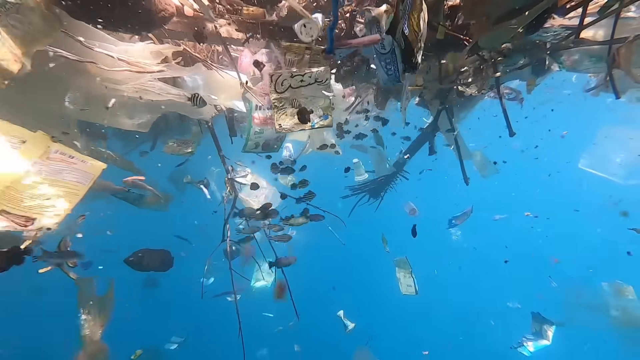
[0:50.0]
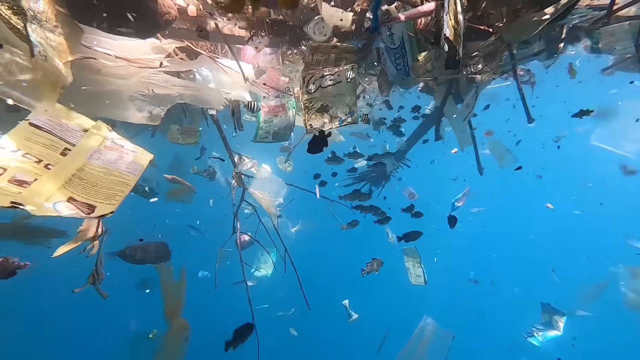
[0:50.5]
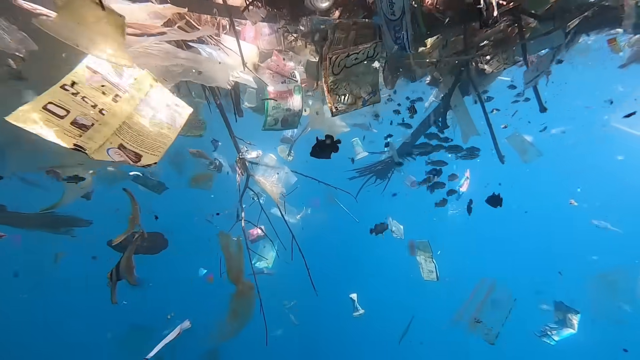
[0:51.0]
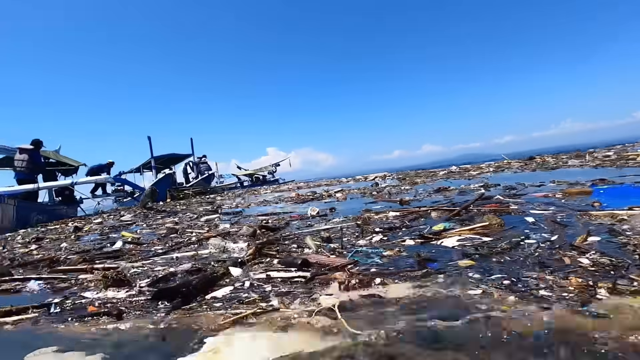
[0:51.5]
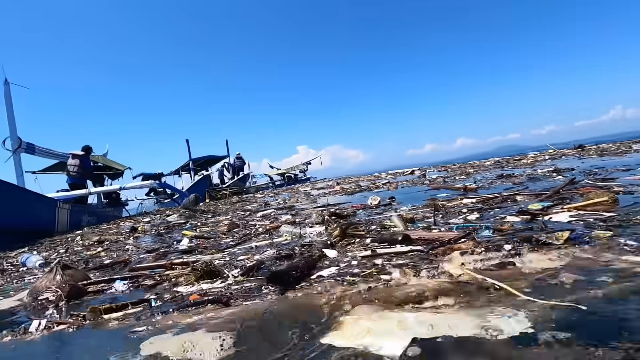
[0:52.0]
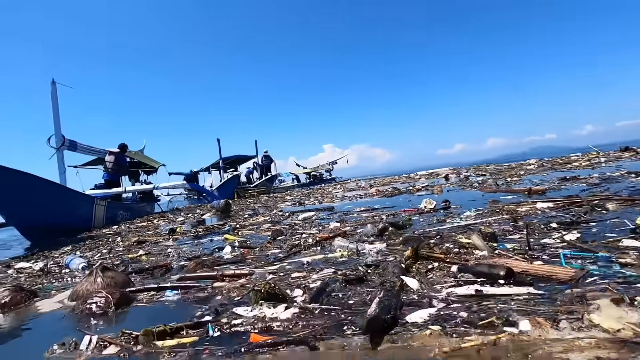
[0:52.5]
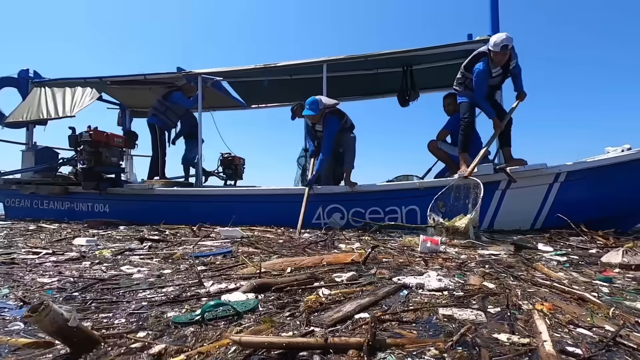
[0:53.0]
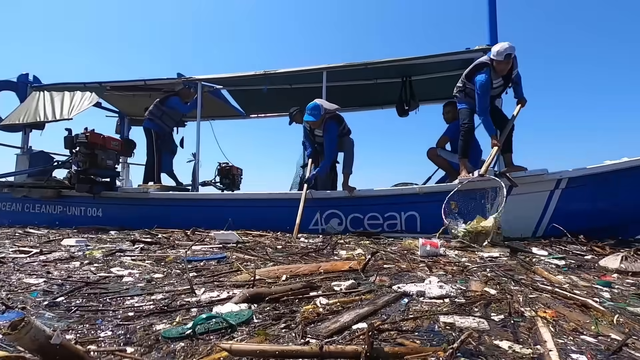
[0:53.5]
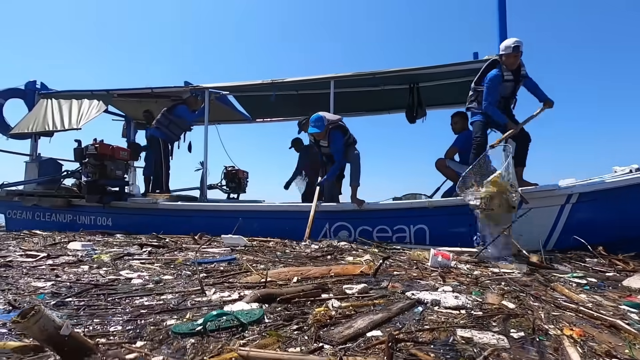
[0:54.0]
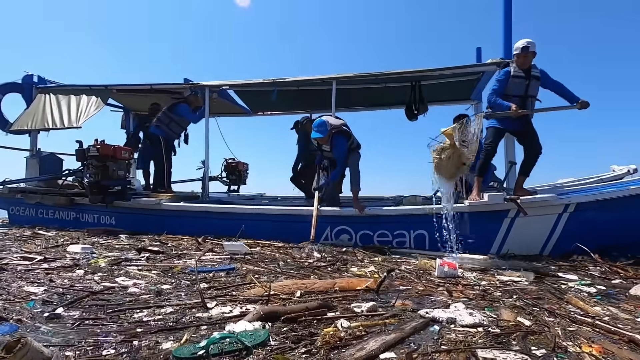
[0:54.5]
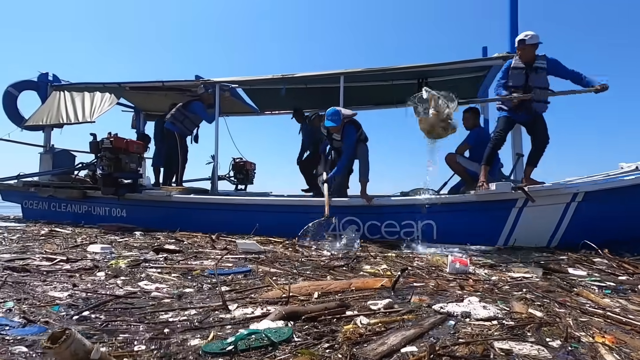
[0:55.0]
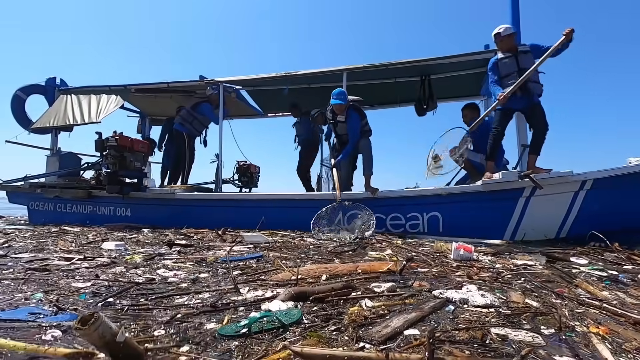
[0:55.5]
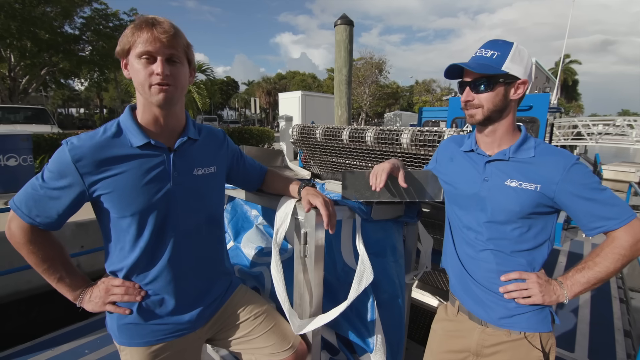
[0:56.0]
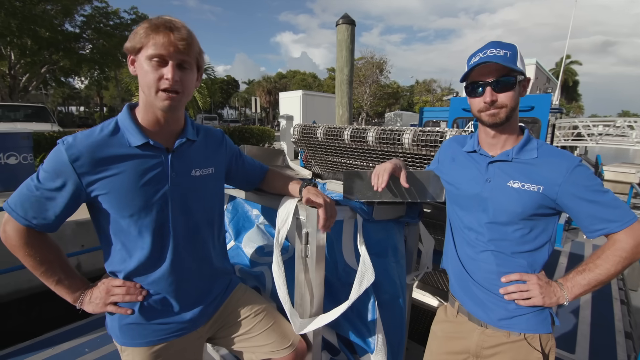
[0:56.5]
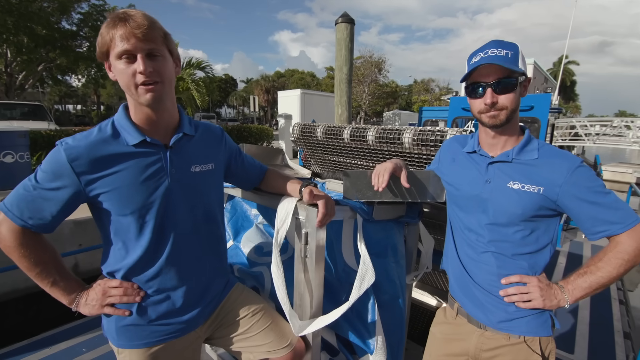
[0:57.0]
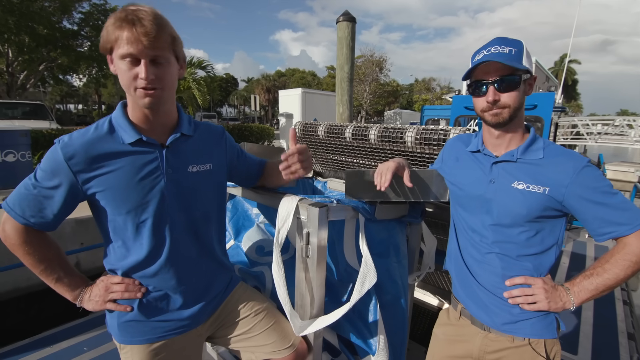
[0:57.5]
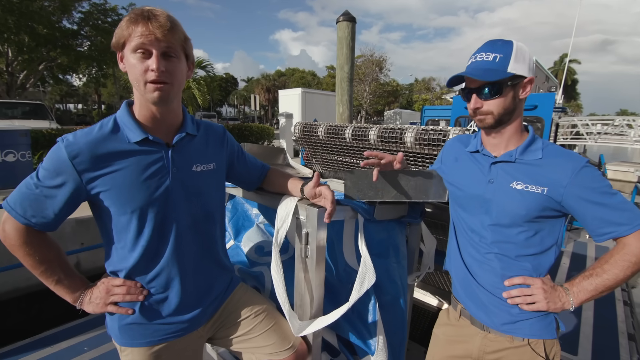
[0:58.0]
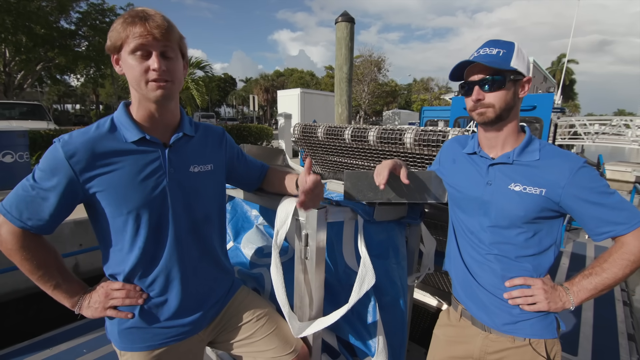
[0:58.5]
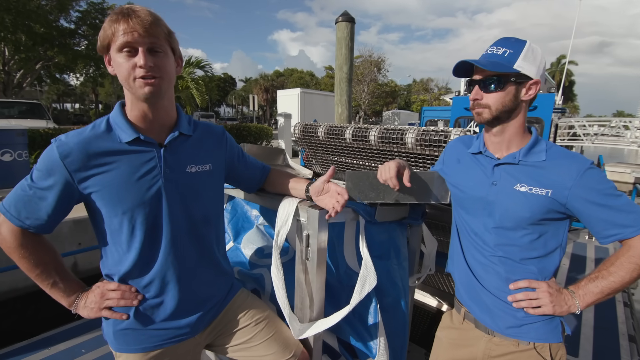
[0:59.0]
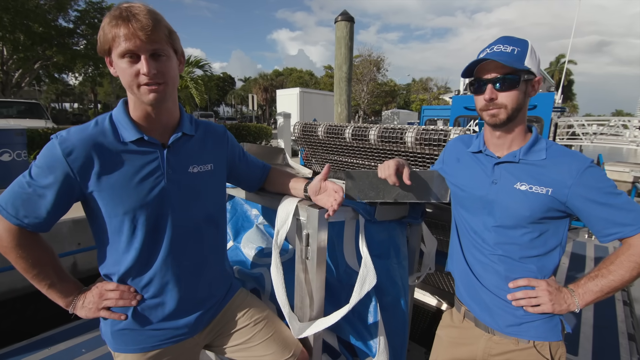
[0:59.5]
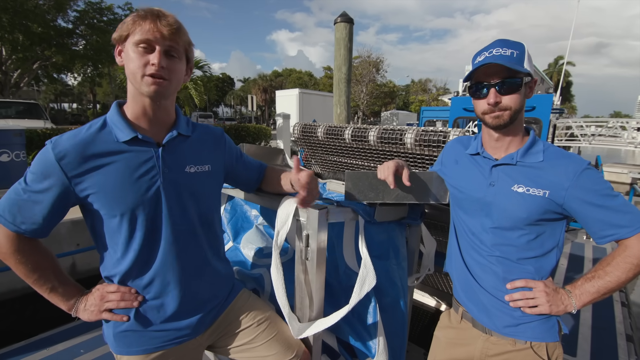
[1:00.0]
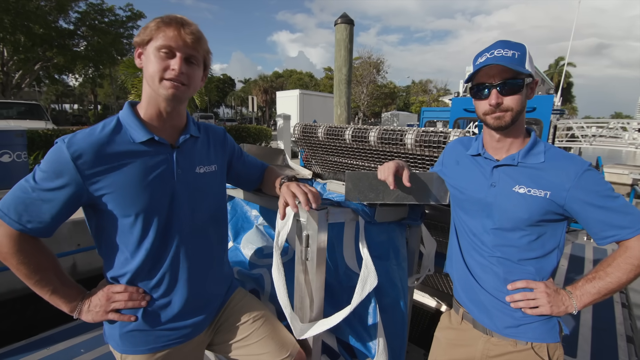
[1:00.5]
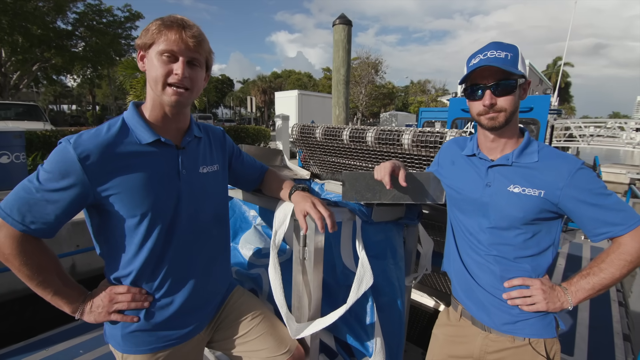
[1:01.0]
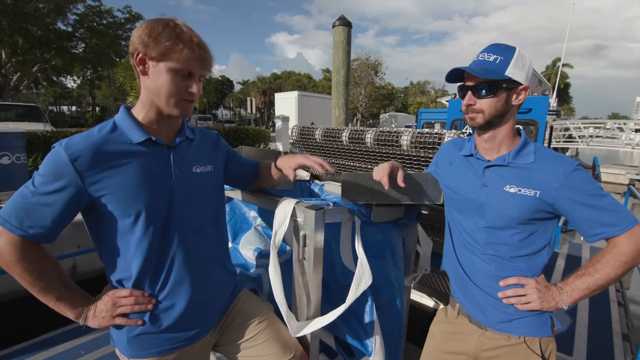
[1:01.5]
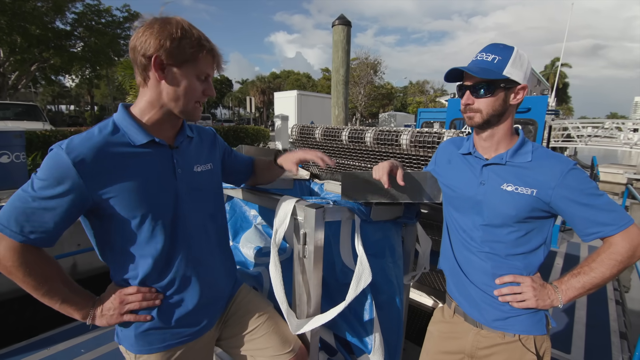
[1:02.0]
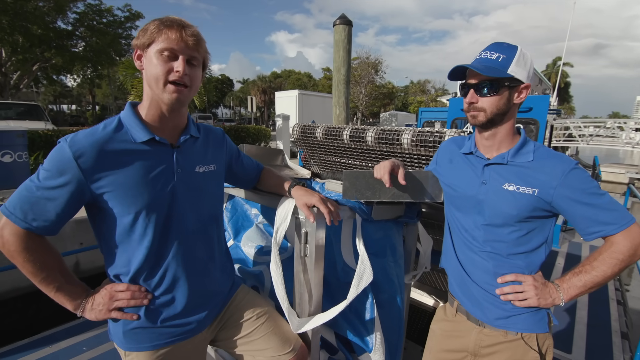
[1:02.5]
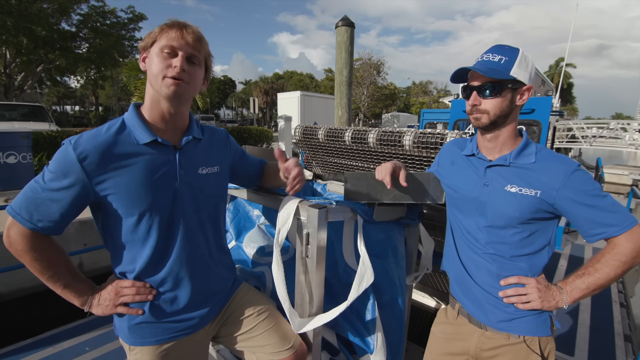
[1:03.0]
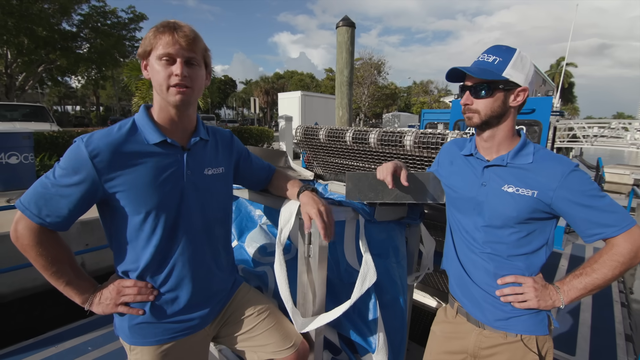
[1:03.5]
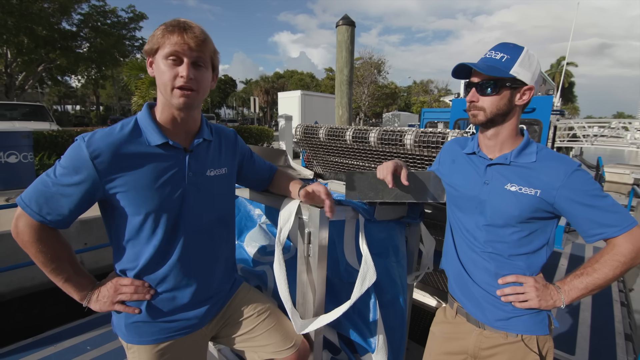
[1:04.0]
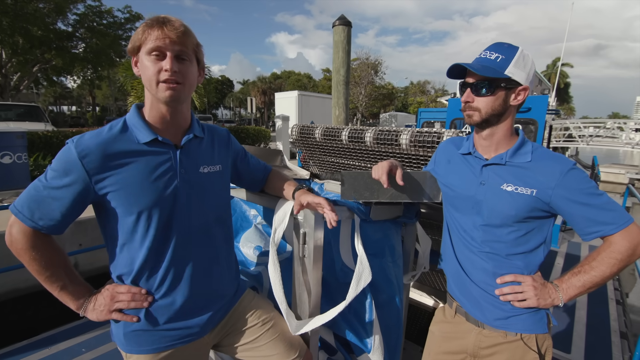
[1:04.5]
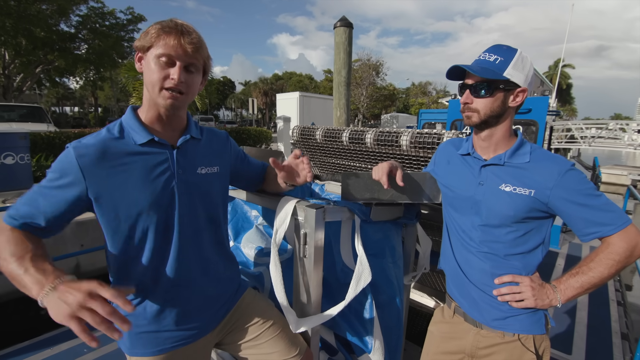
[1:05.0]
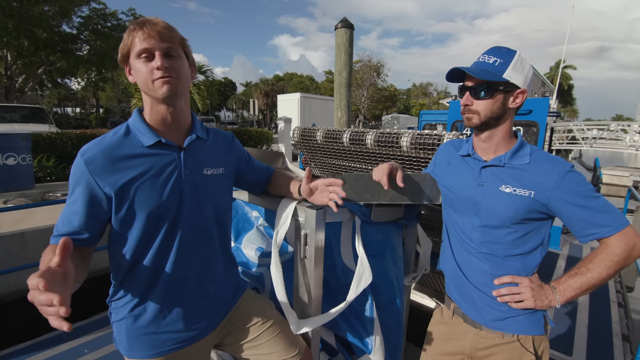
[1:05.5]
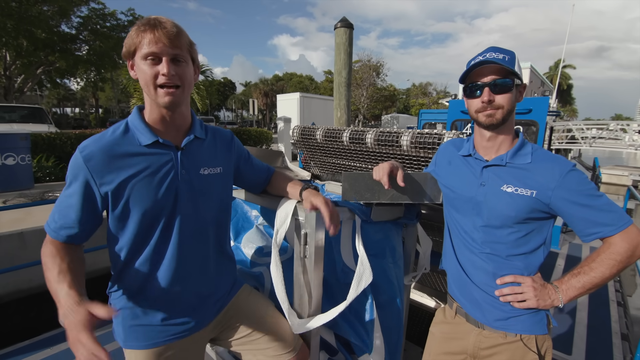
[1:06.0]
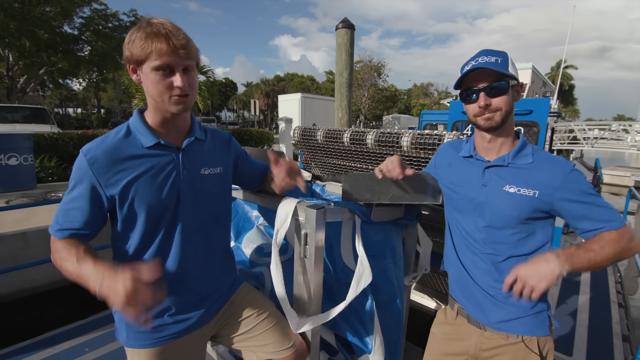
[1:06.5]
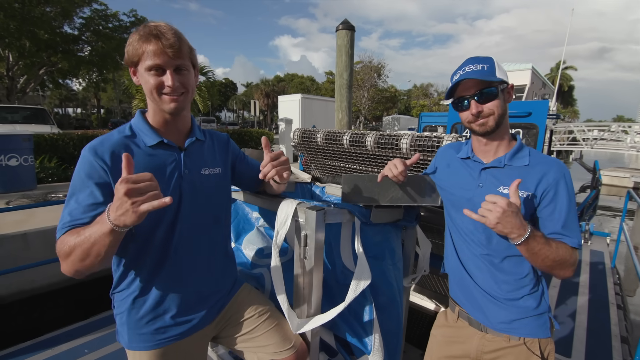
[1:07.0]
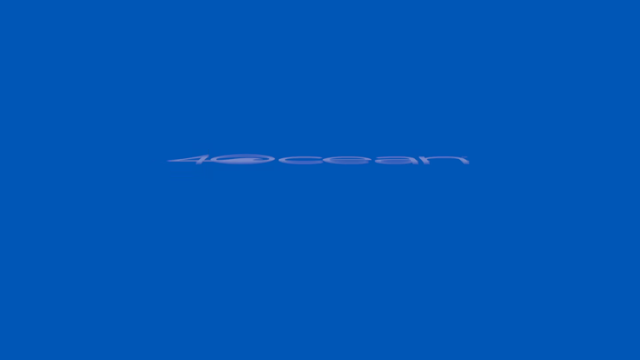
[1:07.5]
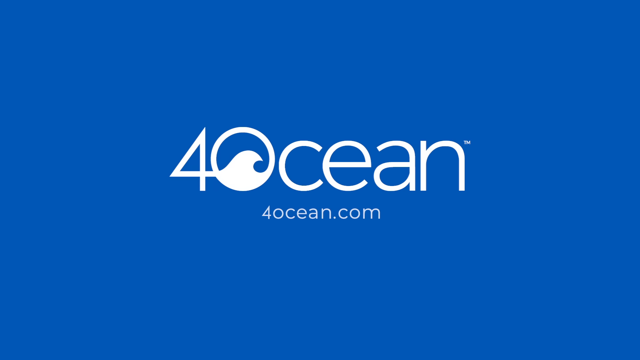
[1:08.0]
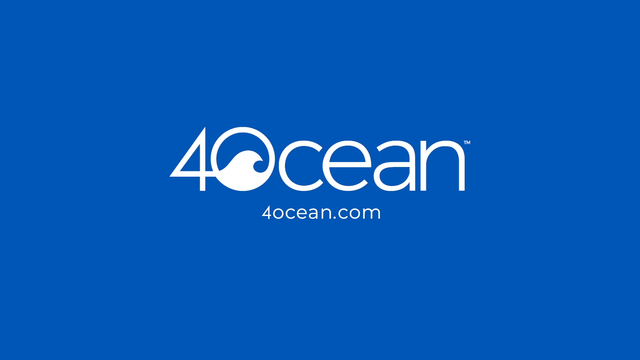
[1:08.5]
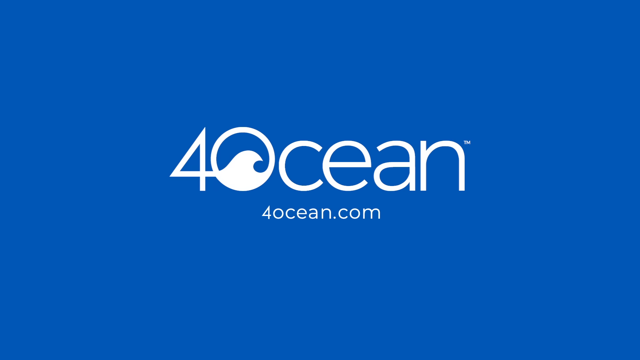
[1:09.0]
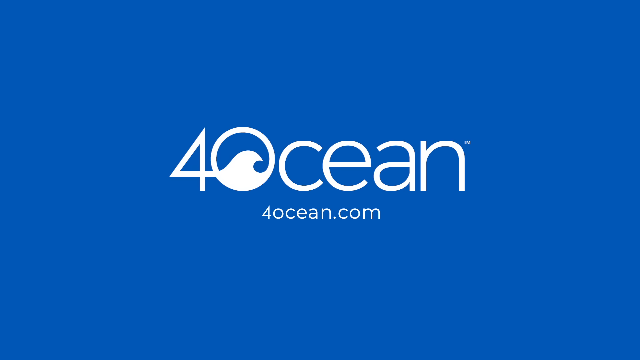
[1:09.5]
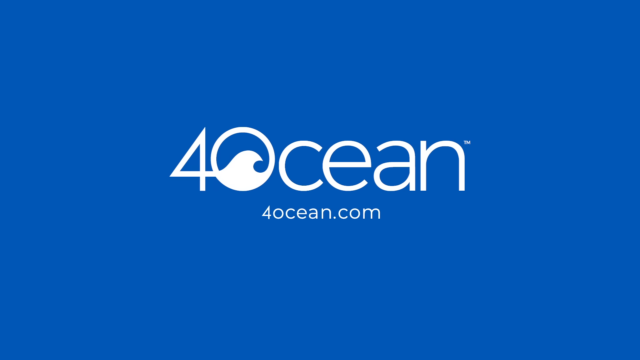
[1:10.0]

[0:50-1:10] Shot underwater, the view shows blue water, with a big pile of trash on top of the ocean at the top of the screen, including paper, plastic and all kinds of other trash. Underneath the pile, one small fish is floating. The camera then comes up above the water, showing the surface covered in trash, with pieces of wood, paper and plastic; the camera's entire view is nothing but trash. A blue floating platform follows, with the number 4 and the word "ocean" written on it. A man wearing black and blue striped pants, a long-sleeved blue shirt and a black vest holds a net and leans down, grabbing trash out of the ocean. A person behind him on the platform does the same.